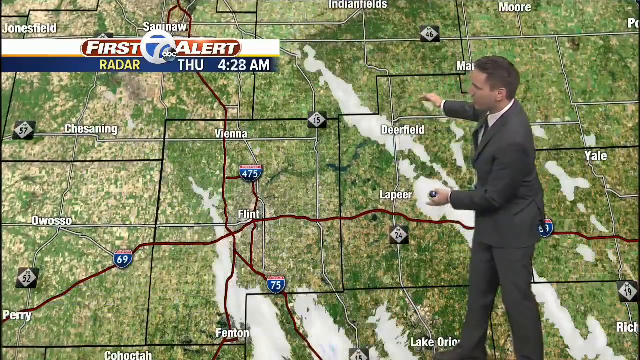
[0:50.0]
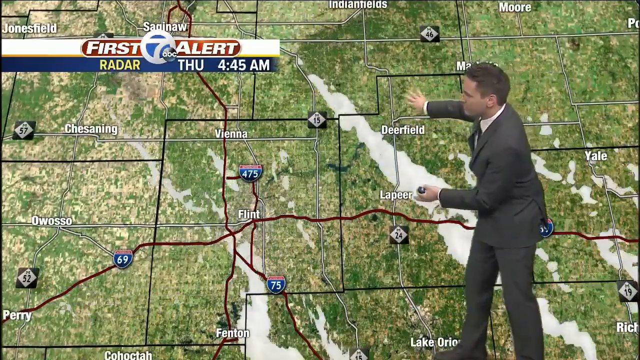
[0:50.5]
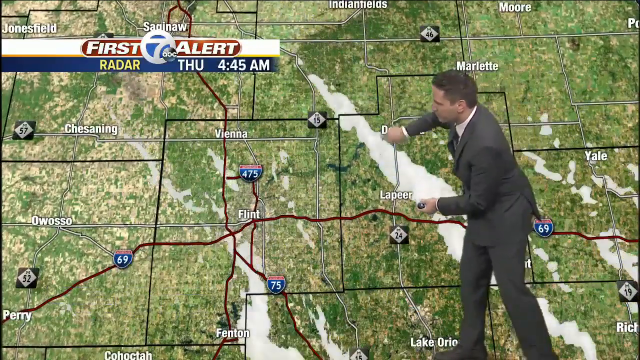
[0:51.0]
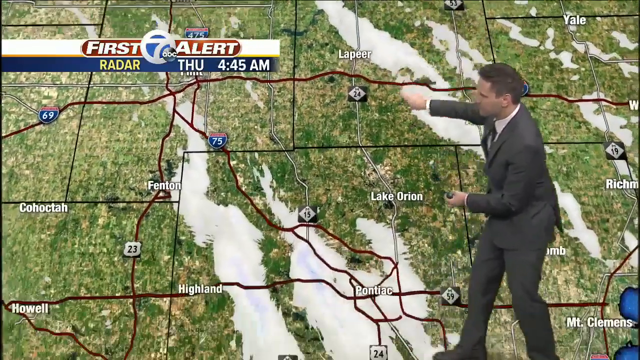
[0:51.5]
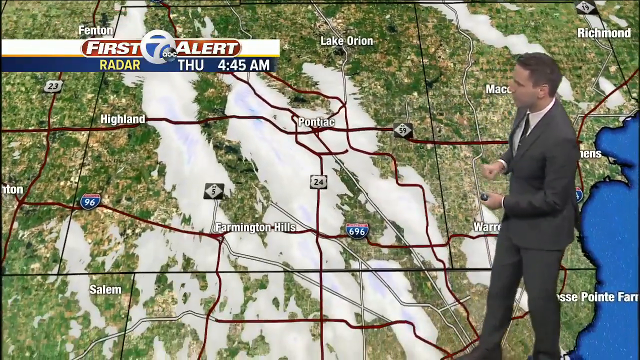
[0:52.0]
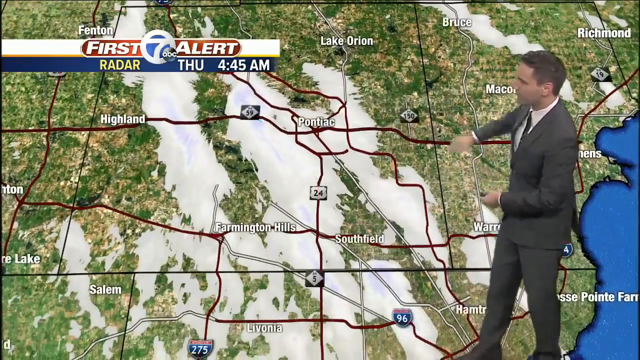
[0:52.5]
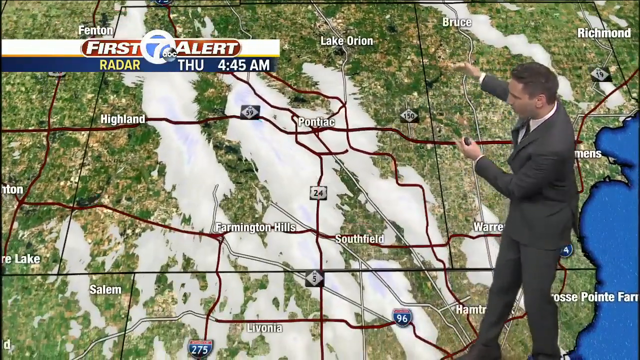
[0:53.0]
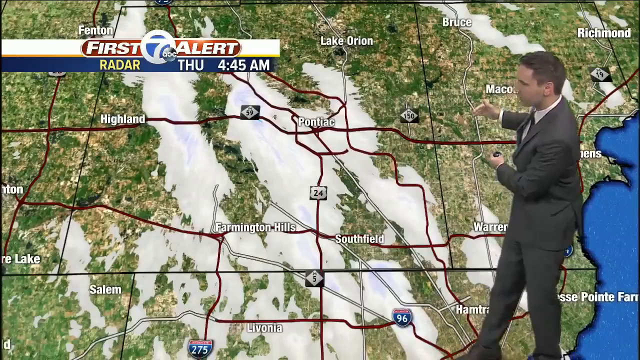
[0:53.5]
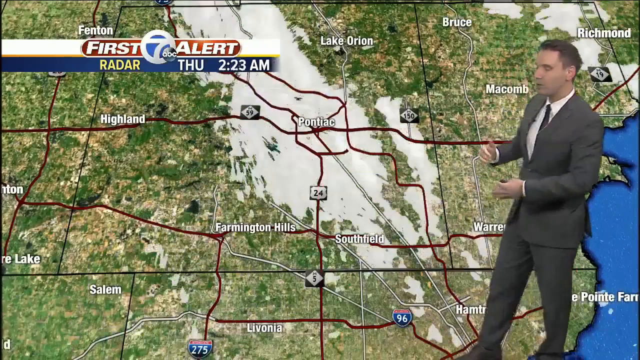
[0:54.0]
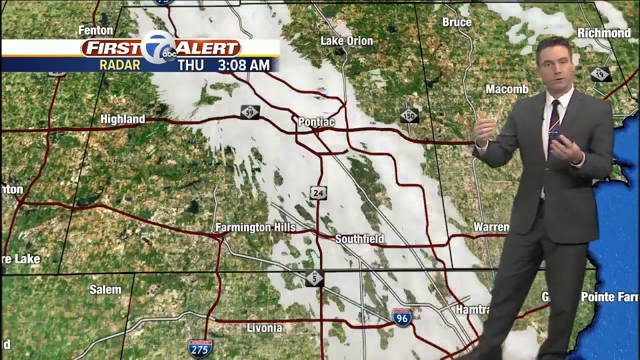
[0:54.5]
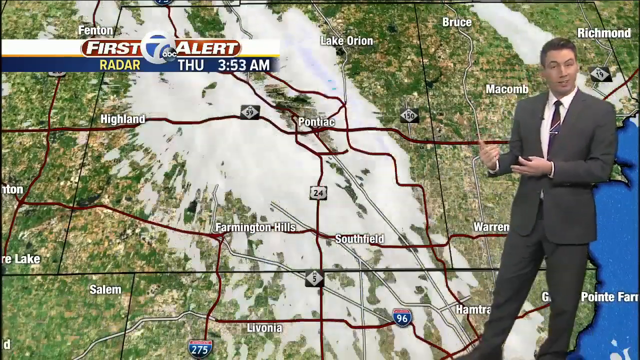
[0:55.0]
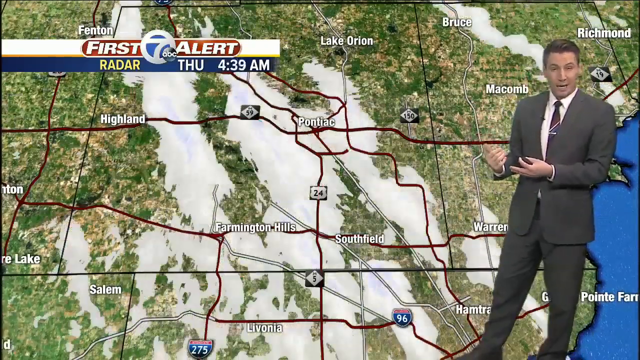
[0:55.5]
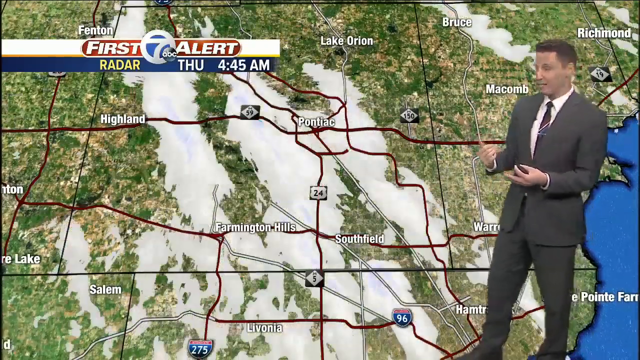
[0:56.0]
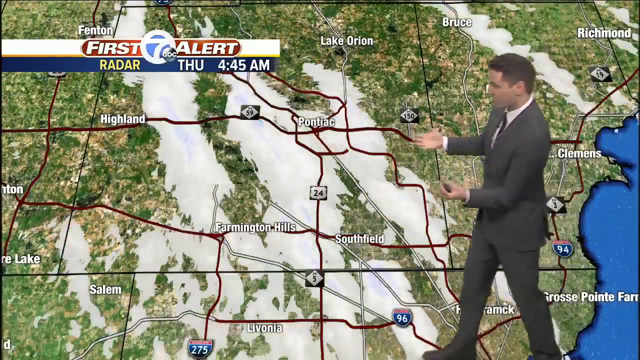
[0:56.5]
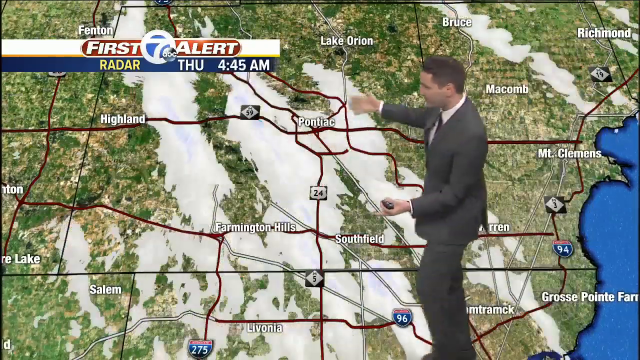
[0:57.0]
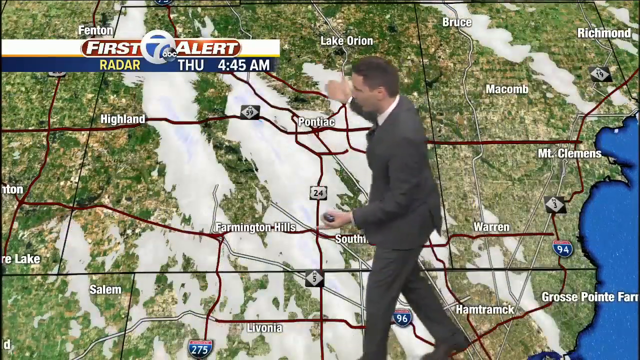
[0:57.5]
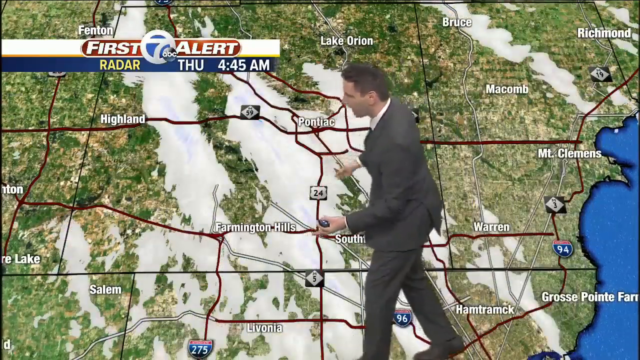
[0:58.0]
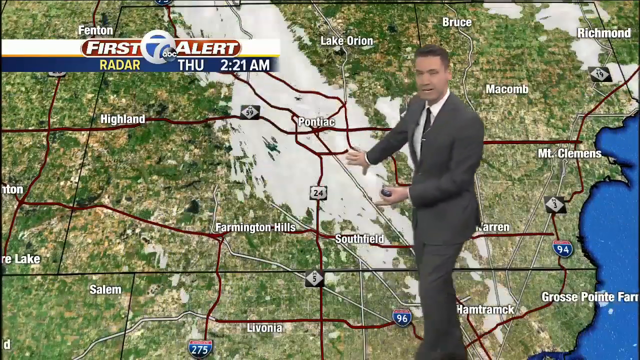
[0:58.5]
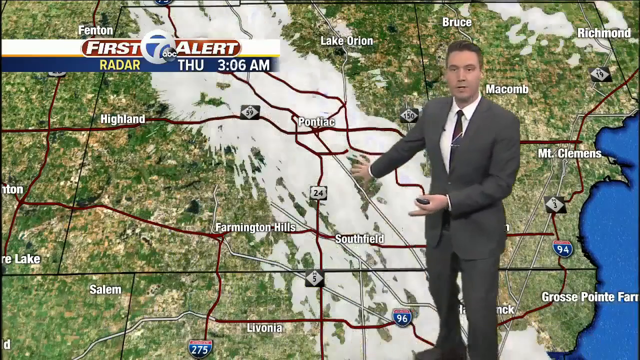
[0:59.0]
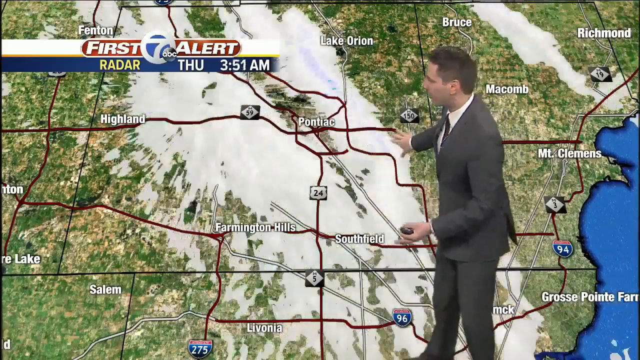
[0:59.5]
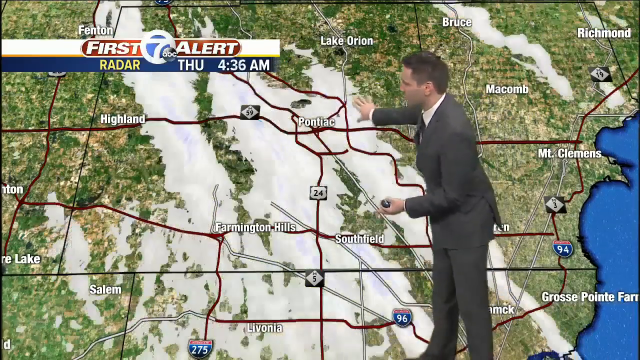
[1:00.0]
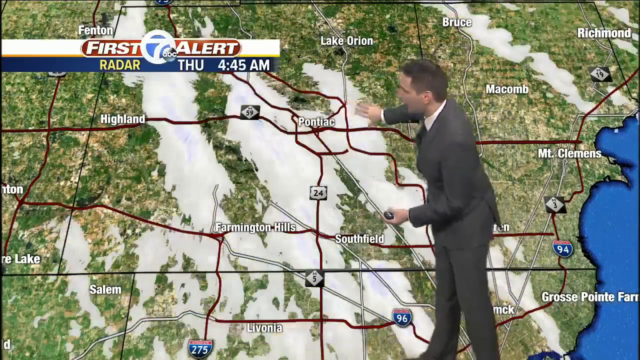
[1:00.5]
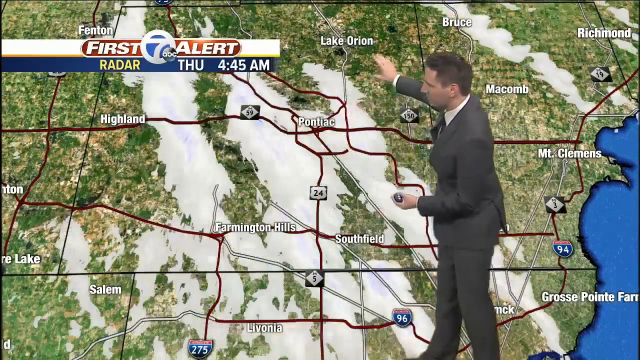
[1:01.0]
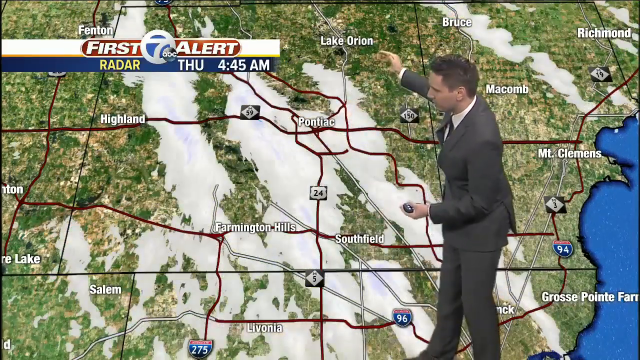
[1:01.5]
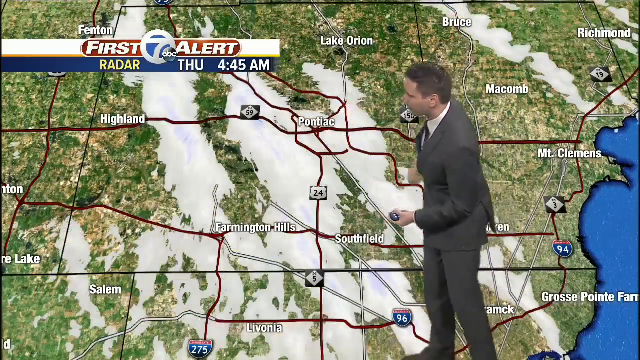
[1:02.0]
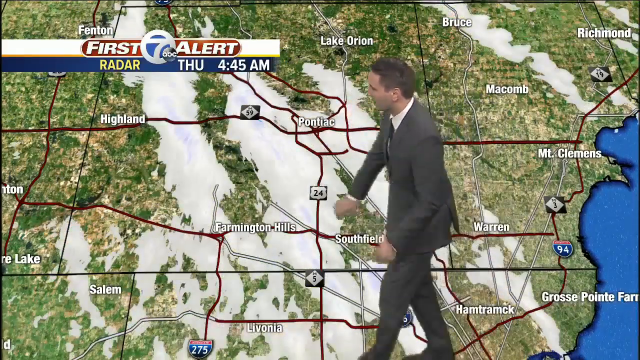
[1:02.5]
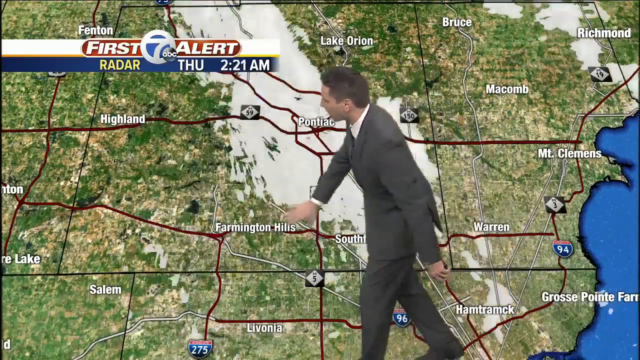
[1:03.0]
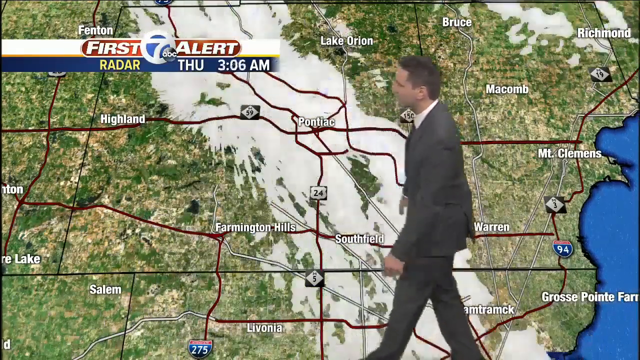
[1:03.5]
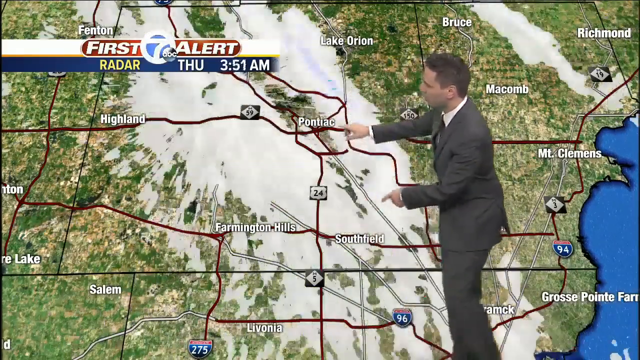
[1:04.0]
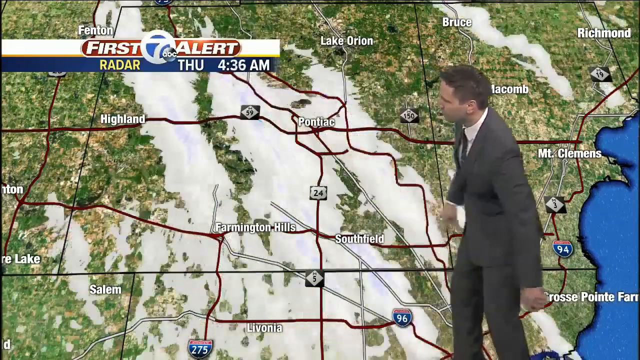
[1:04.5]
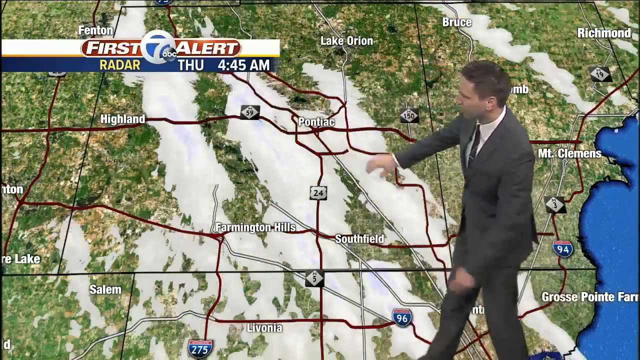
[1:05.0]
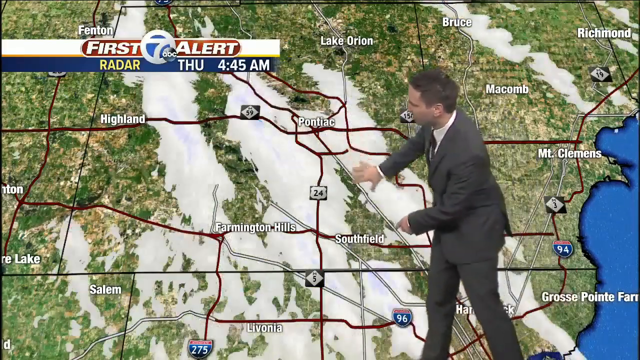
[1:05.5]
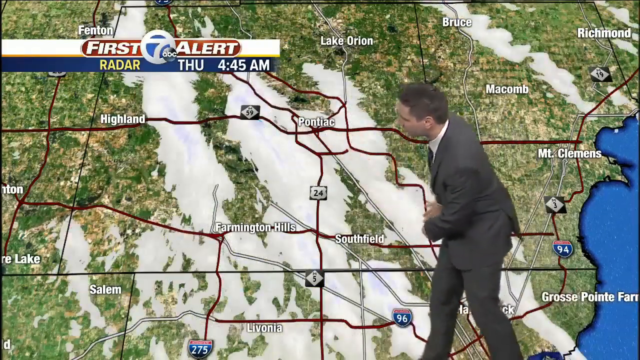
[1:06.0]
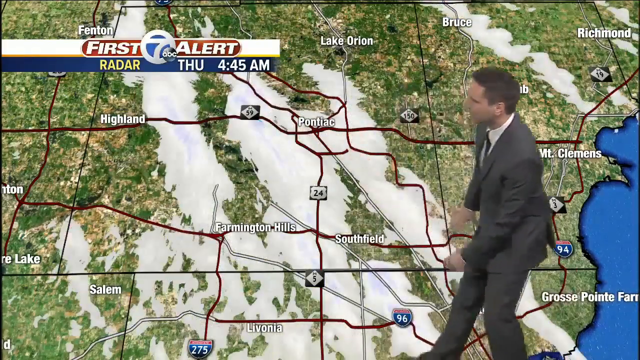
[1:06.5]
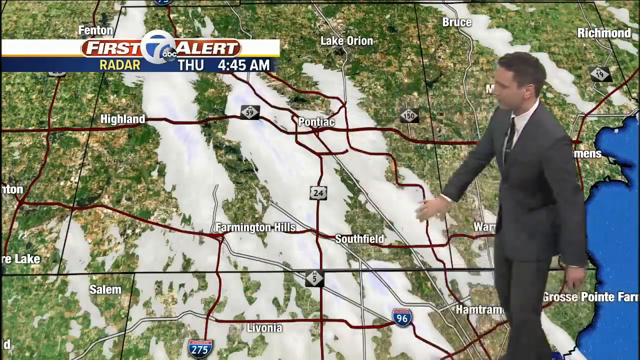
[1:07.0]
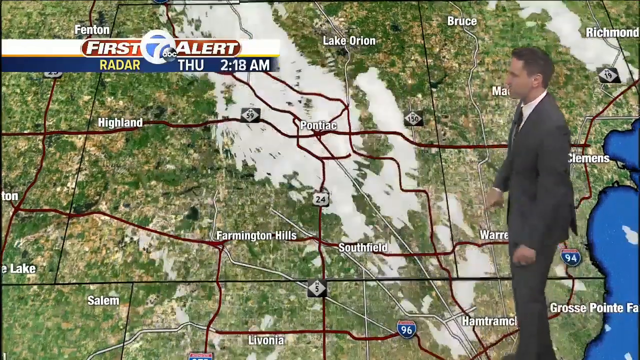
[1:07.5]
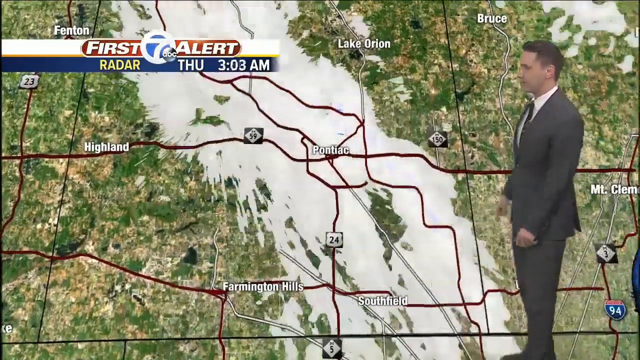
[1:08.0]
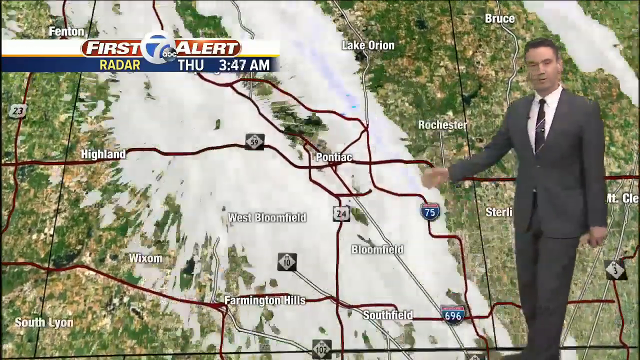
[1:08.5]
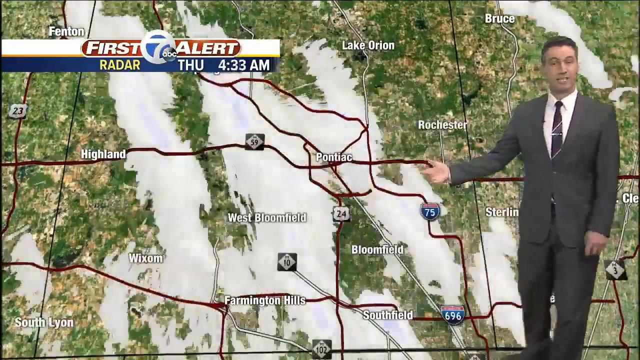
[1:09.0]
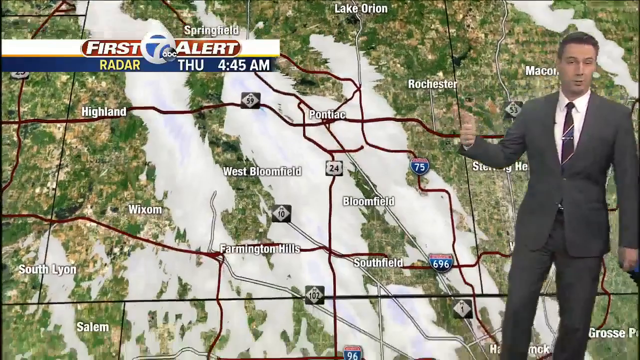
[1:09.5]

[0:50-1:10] Kevin, still in his gray suit, stands in front of the weather map, which zooms in and then zooms out. He is almost dancing, very dramatic with his body and hands. Quite a few more clouds now show on the map; they are strange clouds that seem to move from the northwest diagonally down to the east-southeast. There are three rows of long, narrow clouds coming in from the north and heading down toward the lakes. Kevin's movements and the cloud graphics go together. The map has red lines drawn on it showing freeways, possibly major roadways, and the lakes are visible to the right when the map is zoomed out. Kevin looks at the map, every once in a while looks toward the camera, and then looks back at the map.